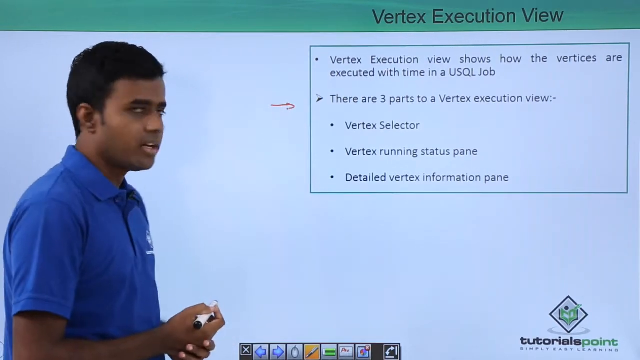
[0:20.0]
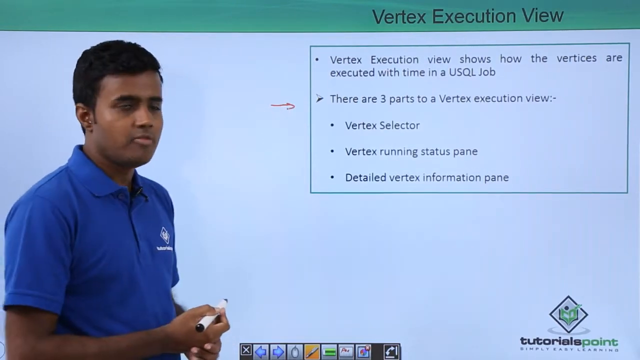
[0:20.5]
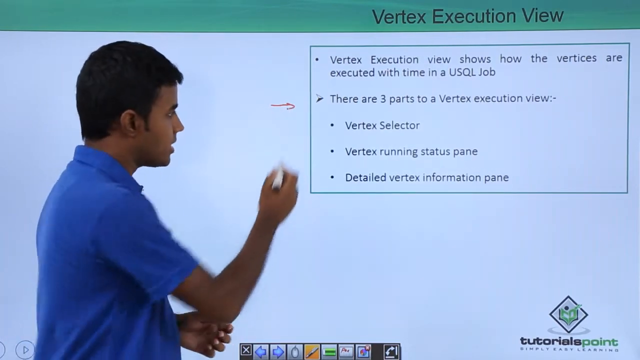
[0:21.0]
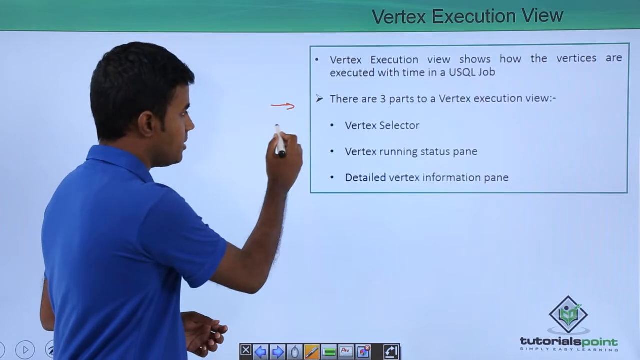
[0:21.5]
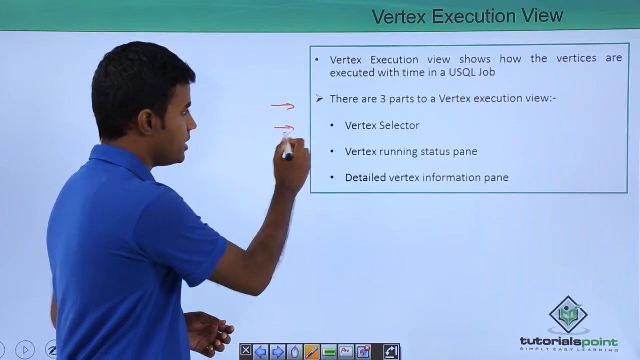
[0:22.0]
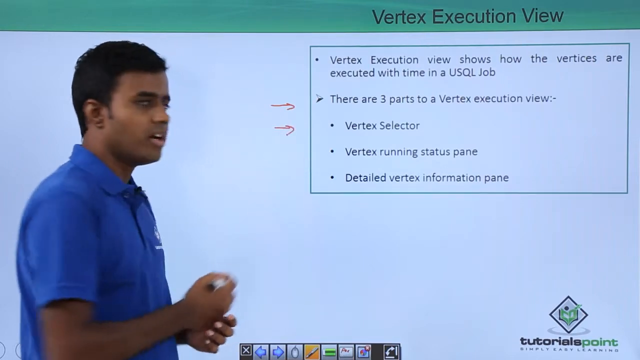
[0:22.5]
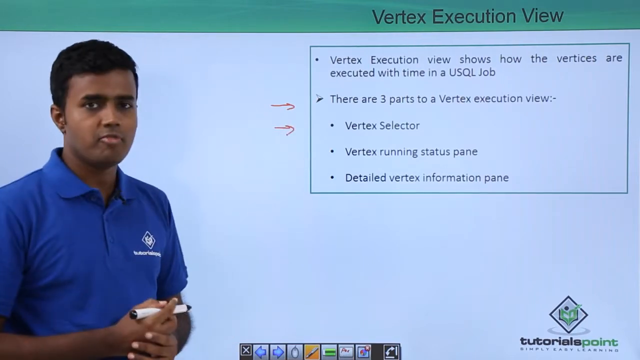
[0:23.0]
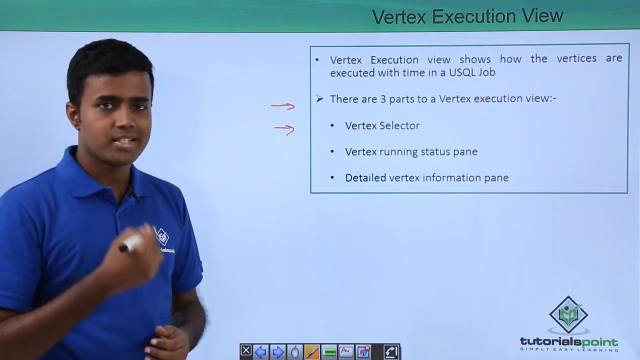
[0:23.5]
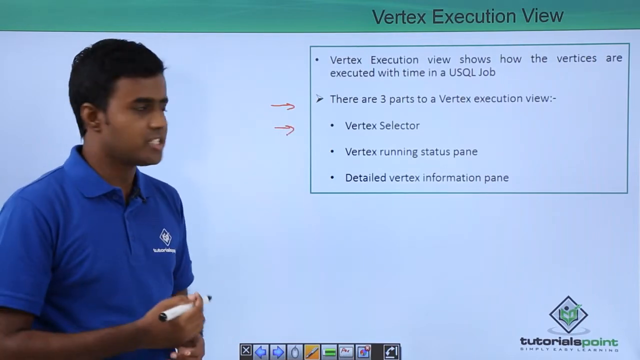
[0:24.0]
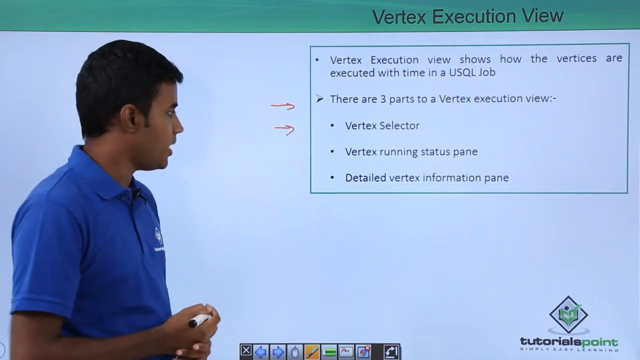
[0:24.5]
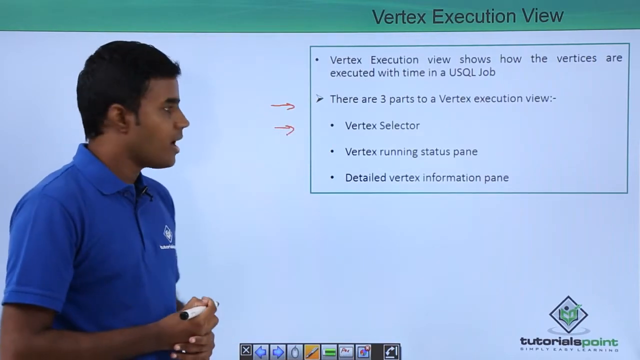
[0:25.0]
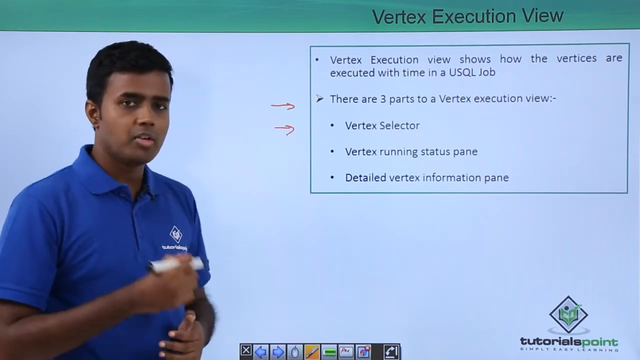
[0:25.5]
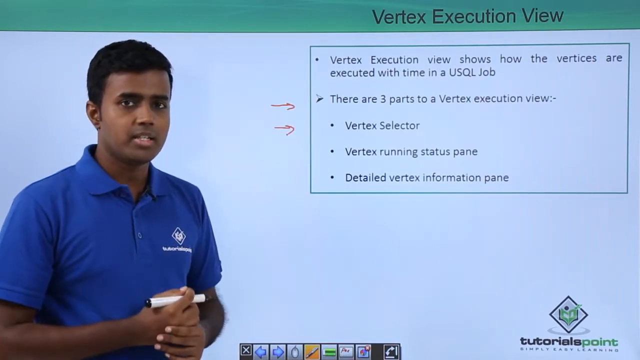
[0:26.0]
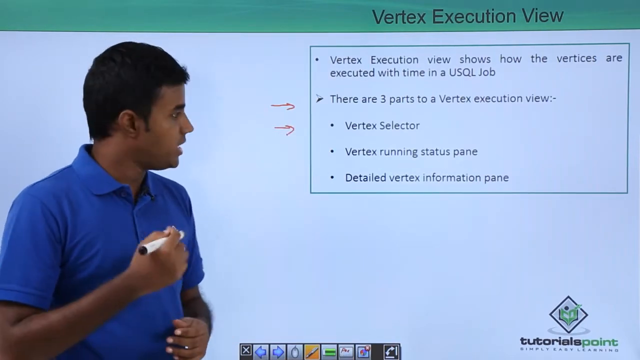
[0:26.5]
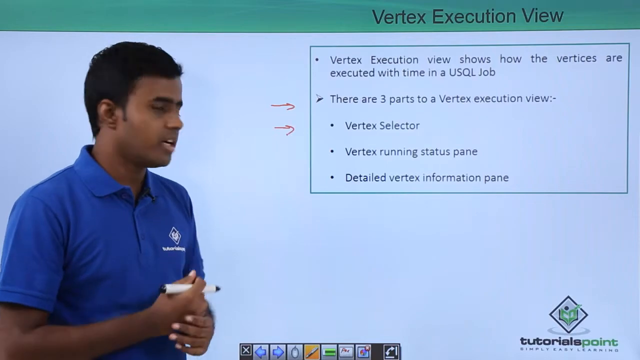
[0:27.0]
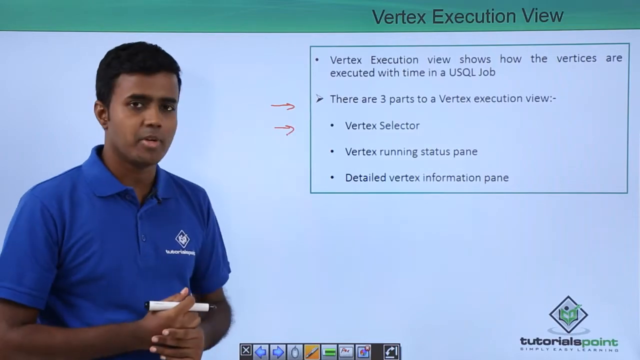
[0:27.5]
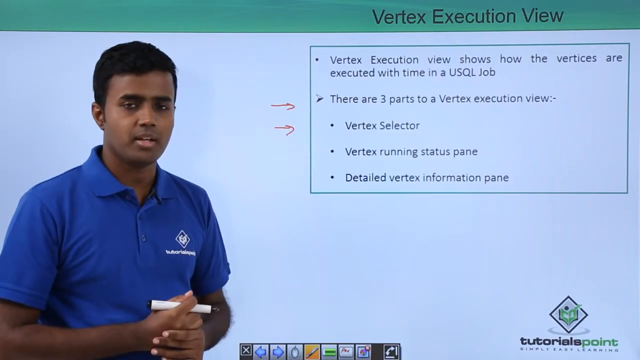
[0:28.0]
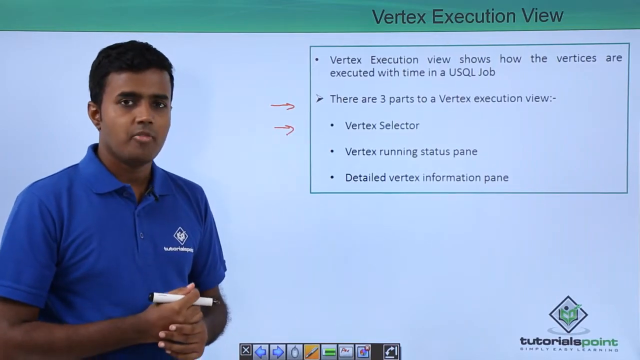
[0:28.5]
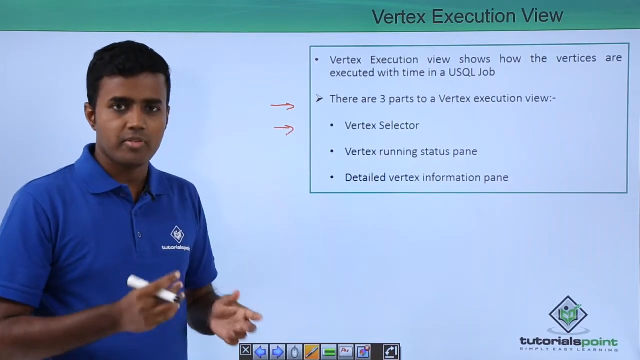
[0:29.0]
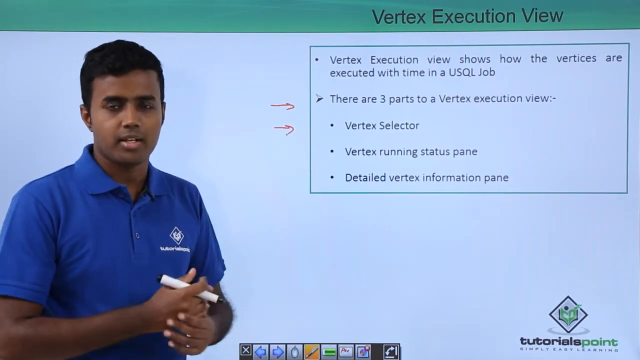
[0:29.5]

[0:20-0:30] The young man is quartering to the camera, his right shoulder pointed toward it and his chest pointed across the screen. The same text remains on screen: "vertex execution view shows how the vertices are executed with time in a USQL job," an arrow with "there are three parts to a vertex execution view," and bullet points "vertex selector," "vertex running status pane" and "detailed vertex information pane." He turns his back to the camera and again marks on the screen with a red marker, gesturing with his right hand as he speaks about what is on the screen.